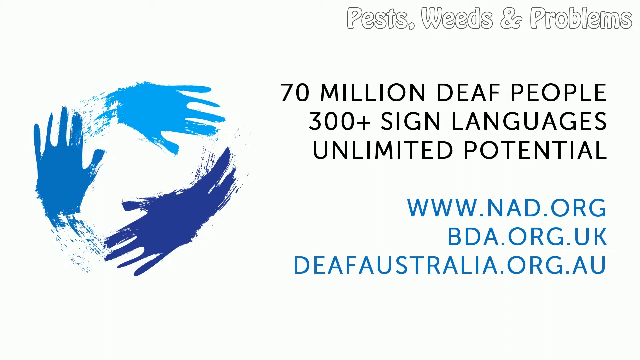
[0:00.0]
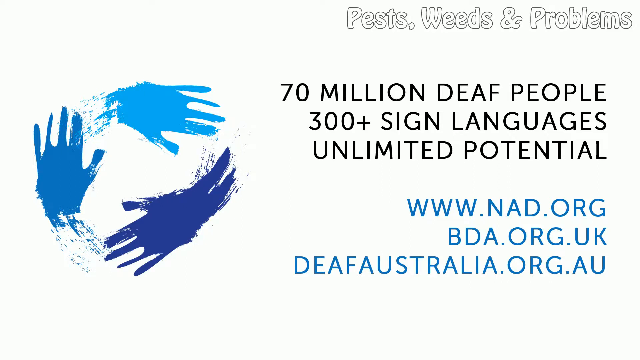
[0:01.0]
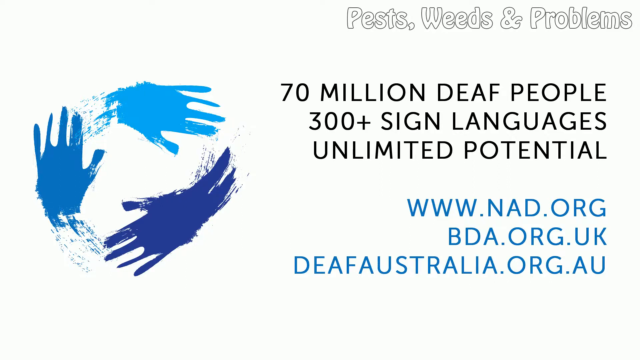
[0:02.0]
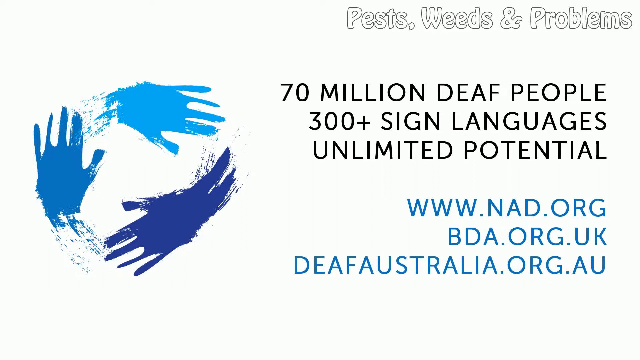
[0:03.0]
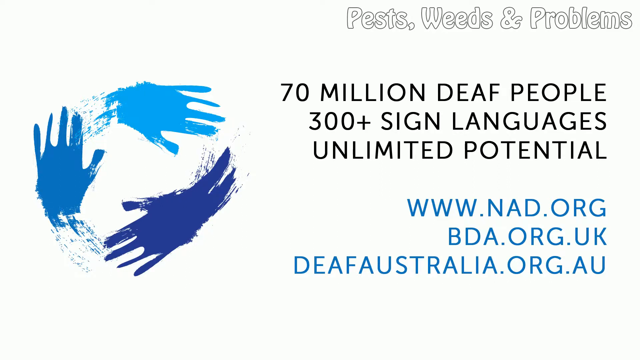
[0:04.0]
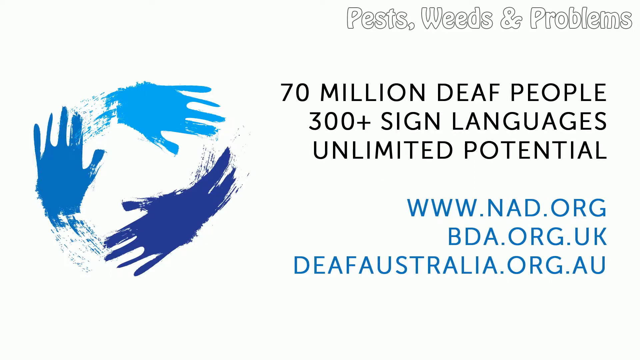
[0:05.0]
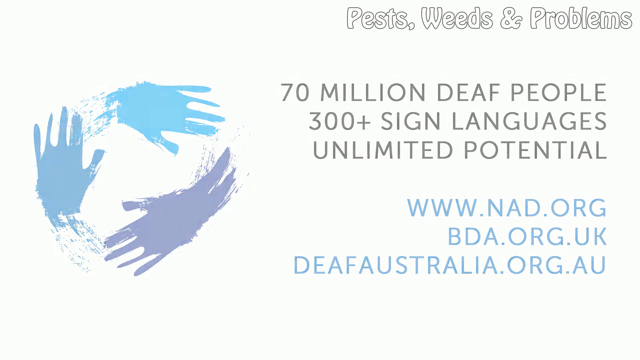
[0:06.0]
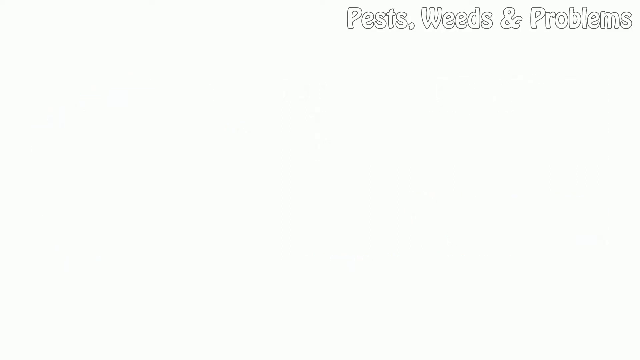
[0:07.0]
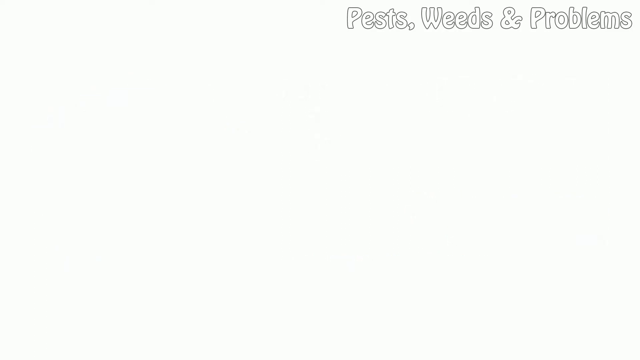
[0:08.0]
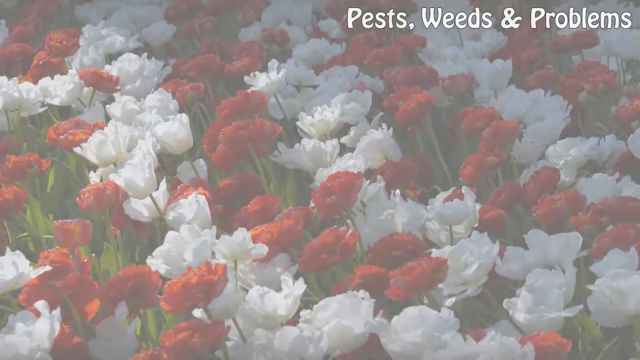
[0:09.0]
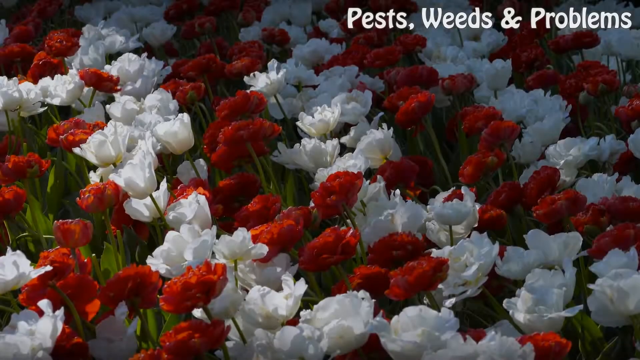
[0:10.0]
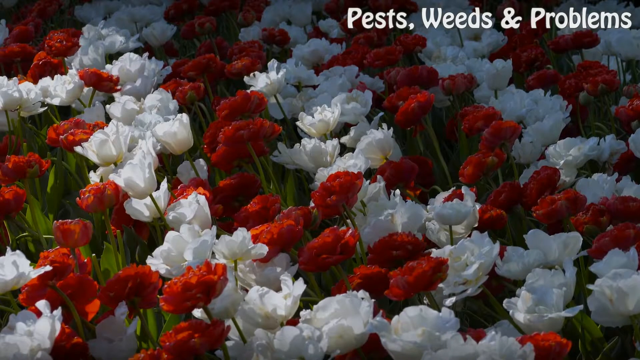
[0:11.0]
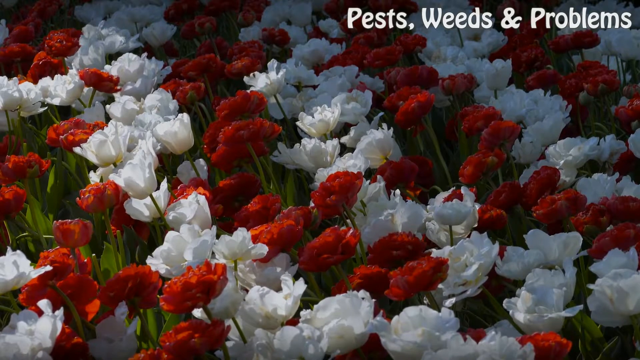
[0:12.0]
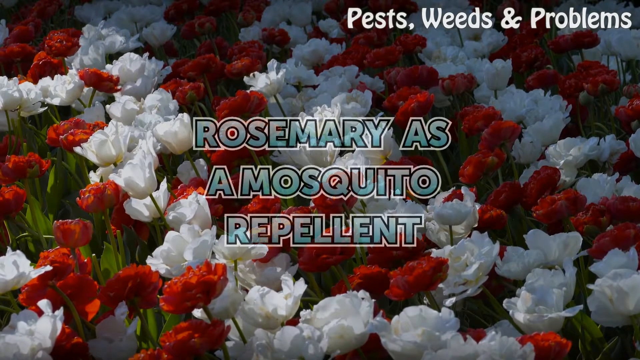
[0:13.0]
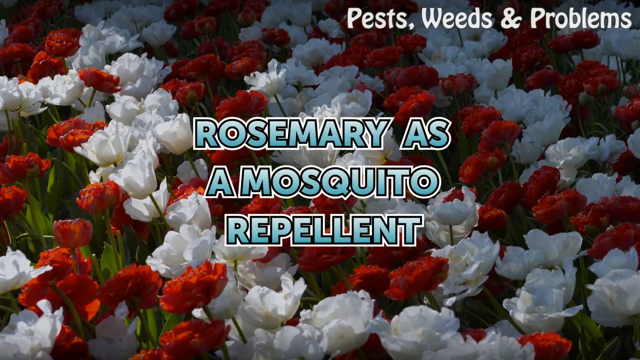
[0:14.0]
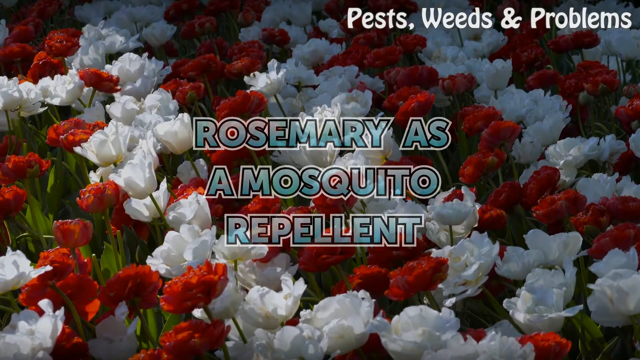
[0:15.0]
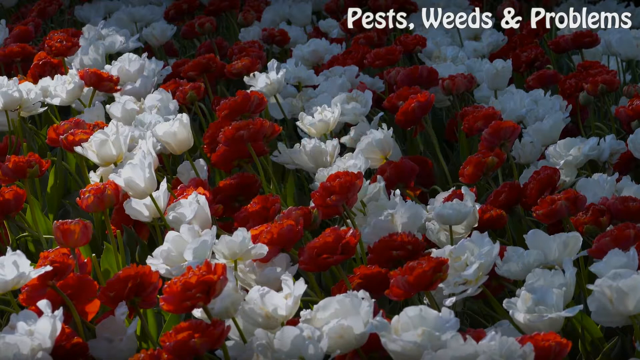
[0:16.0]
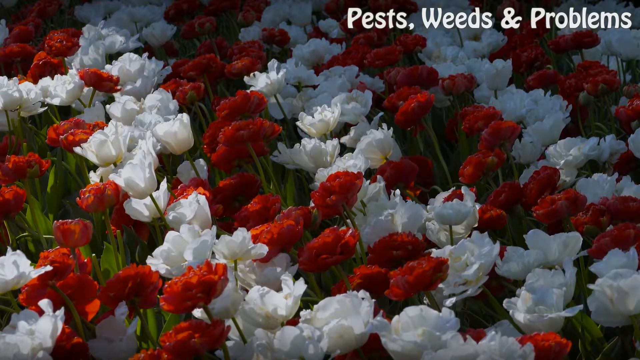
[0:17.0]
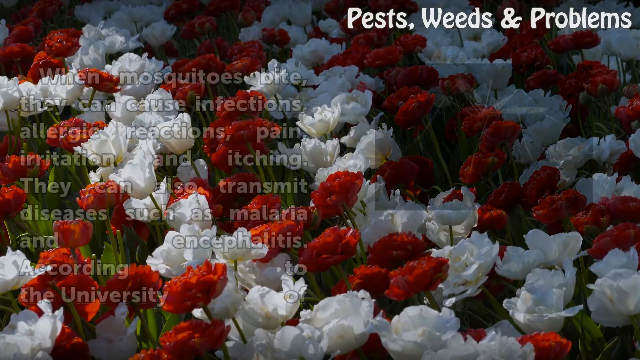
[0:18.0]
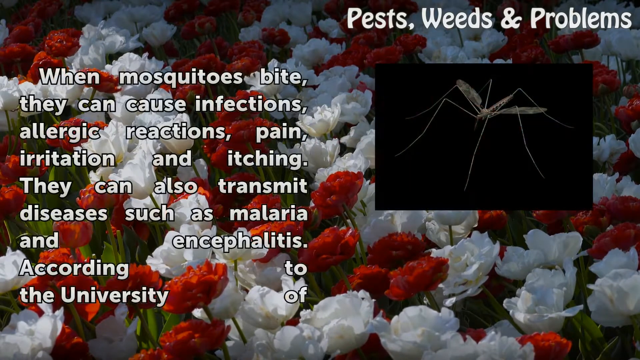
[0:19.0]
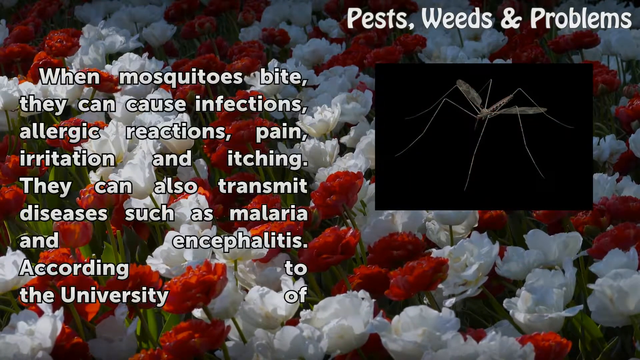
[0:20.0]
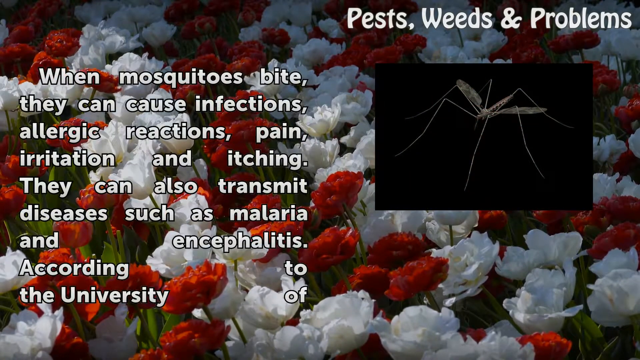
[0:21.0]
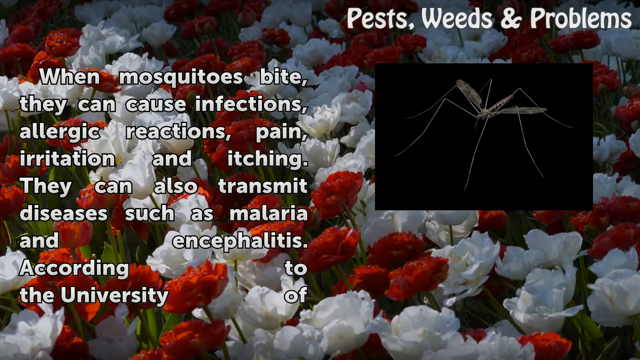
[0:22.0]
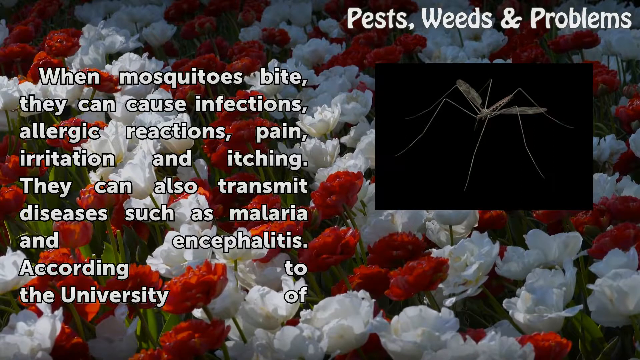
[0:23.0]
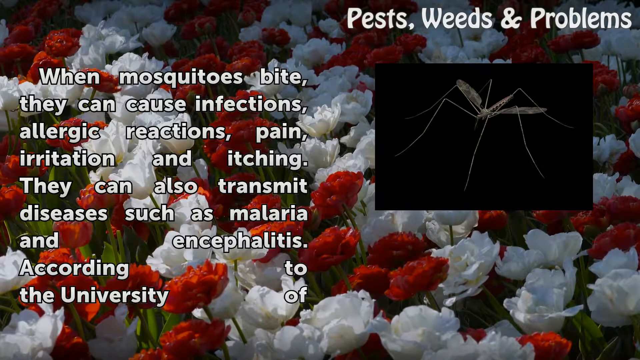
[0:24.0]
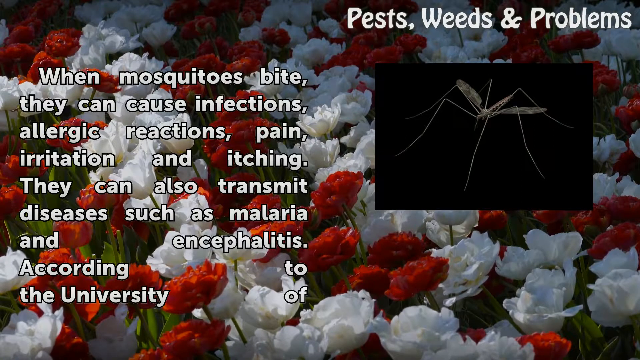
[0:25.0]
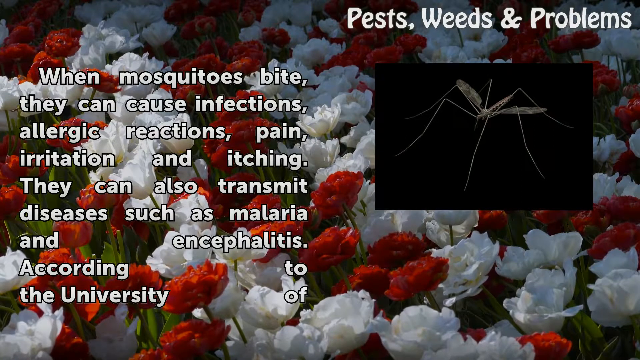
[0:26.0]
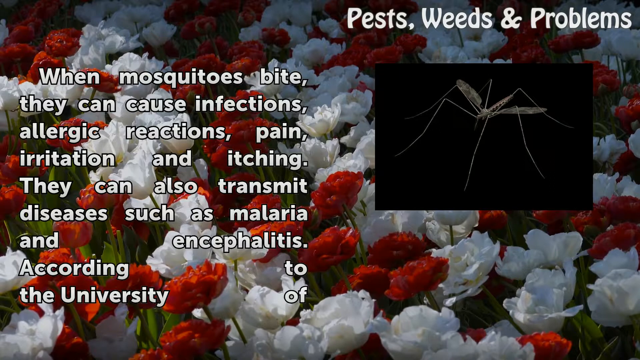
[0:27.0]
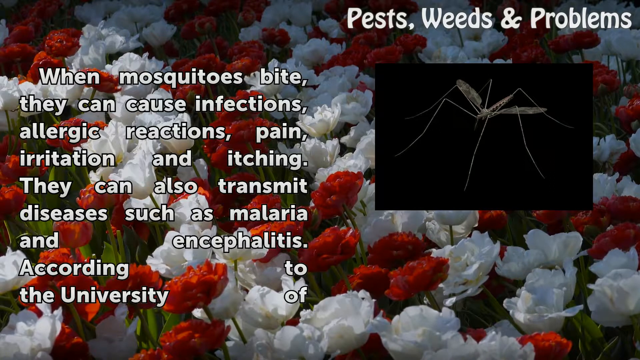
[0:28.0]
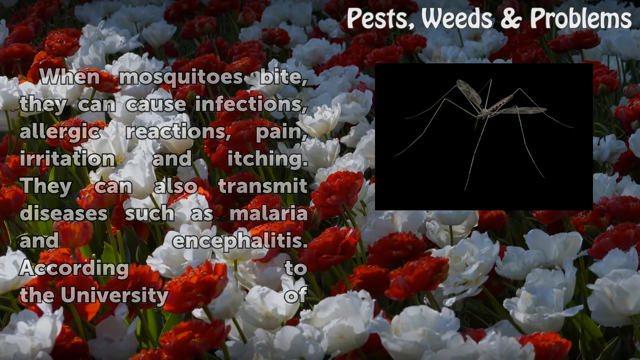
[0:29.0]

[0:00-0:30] The video opens on a black background. On the left side there is a dark blue handprint with little skid marks, kind of, underneath it running down to the right. Also on the left are a light blue one on the top and a purplish one on the bottom left, so the three form a circle. At the top right, white text with a black border reads "pests, weeds, and problems." Below that, in dark black letters, is "70 million deaf people, 300 plus sign languages, unlimited potential," and below that are three links to different organizations. The video then cuts to flowers, with a red rose coming from the left. There are rows of flowers alternating red, white, red, white, red, white, red, with a little of the green leaves mixed in. In the center, gray text with a black border and then a white border around that reads "rosemary as our mosquito repellent." On the right side there is a little square with a black background and a picture of a mosquito, and the whole left side is information about mosquitoes.